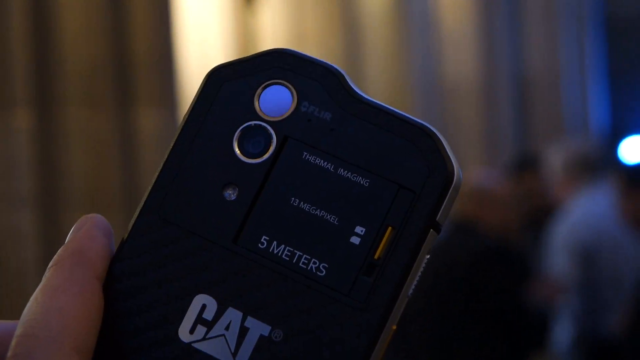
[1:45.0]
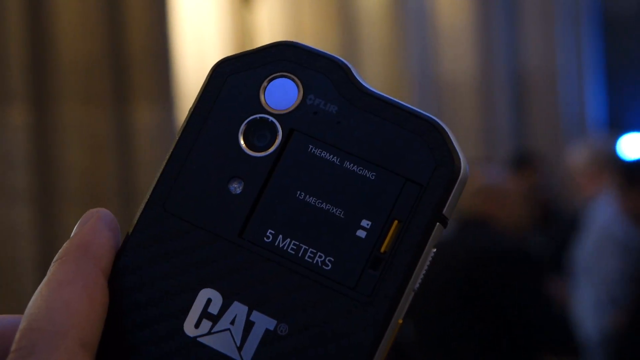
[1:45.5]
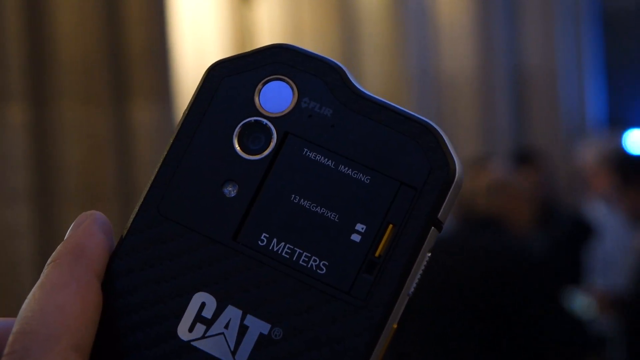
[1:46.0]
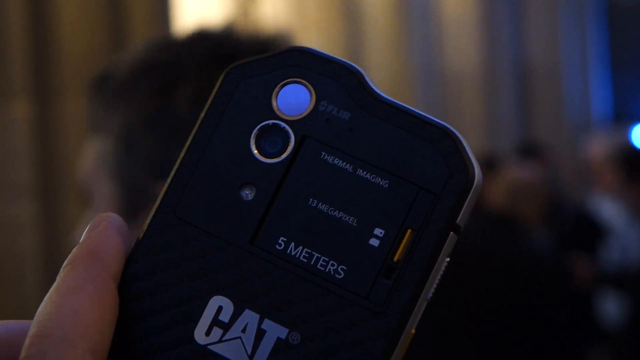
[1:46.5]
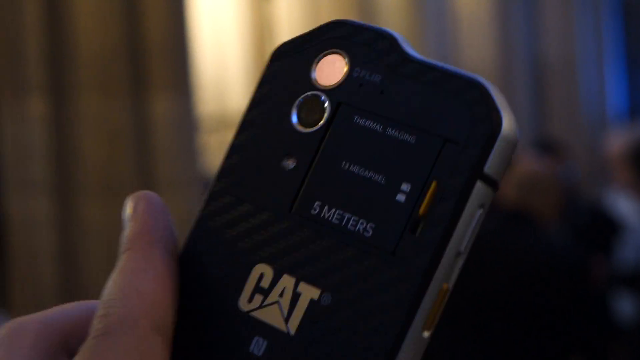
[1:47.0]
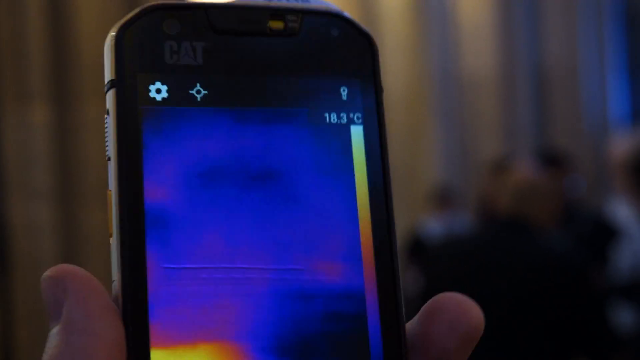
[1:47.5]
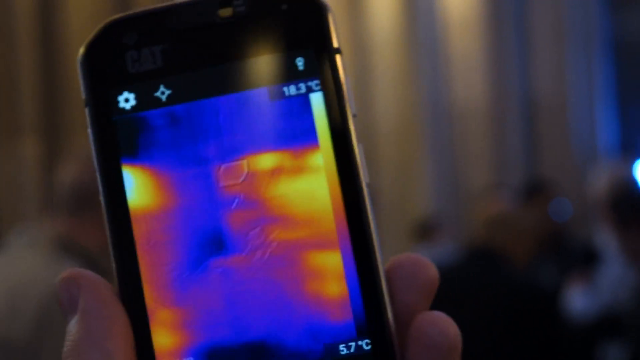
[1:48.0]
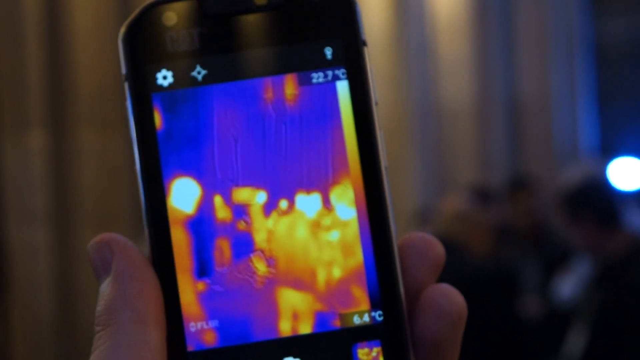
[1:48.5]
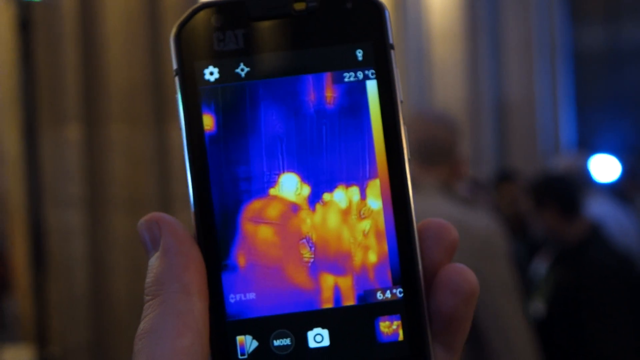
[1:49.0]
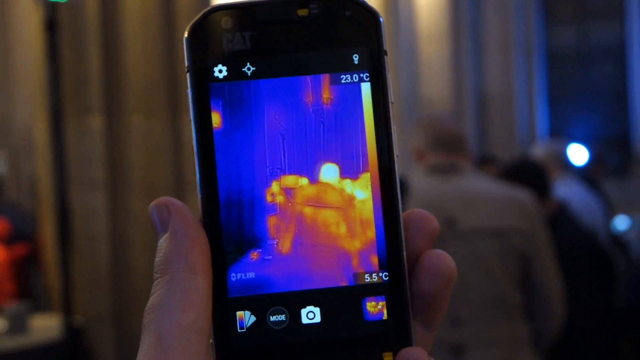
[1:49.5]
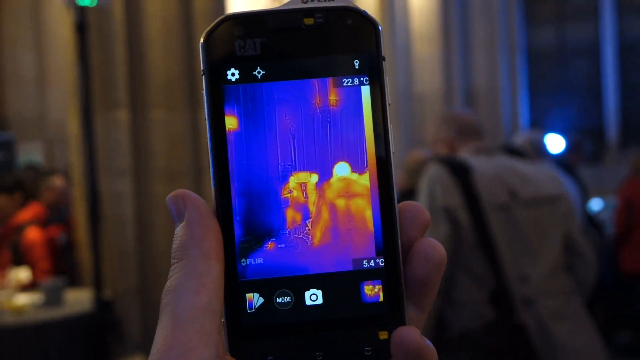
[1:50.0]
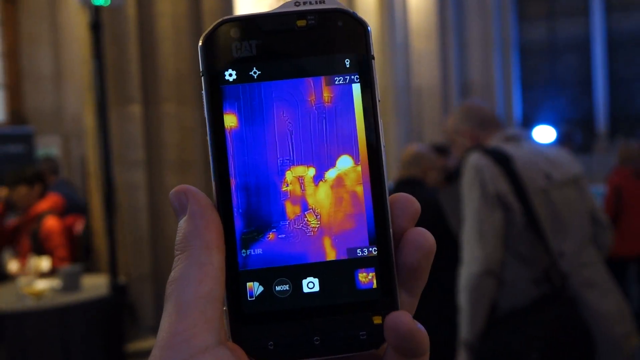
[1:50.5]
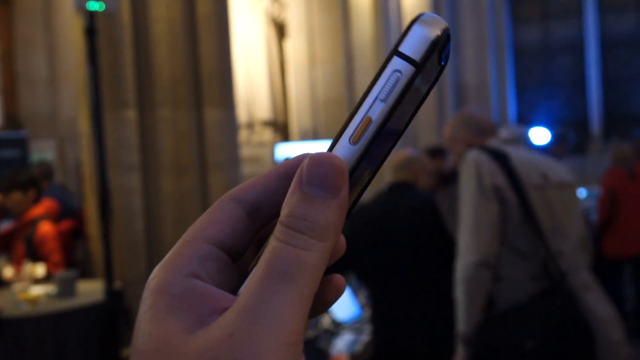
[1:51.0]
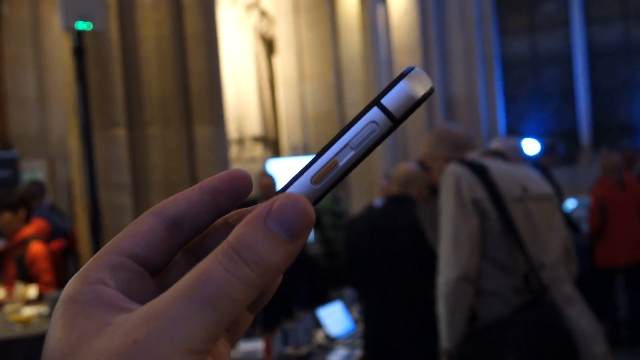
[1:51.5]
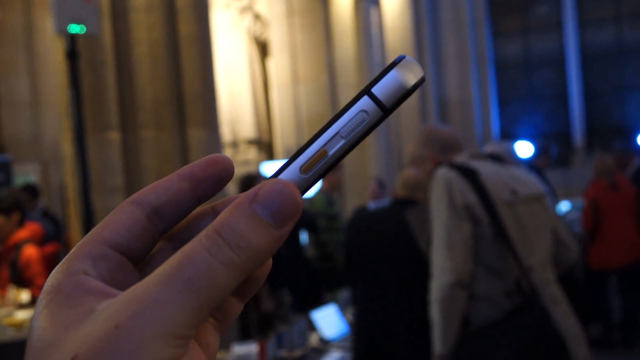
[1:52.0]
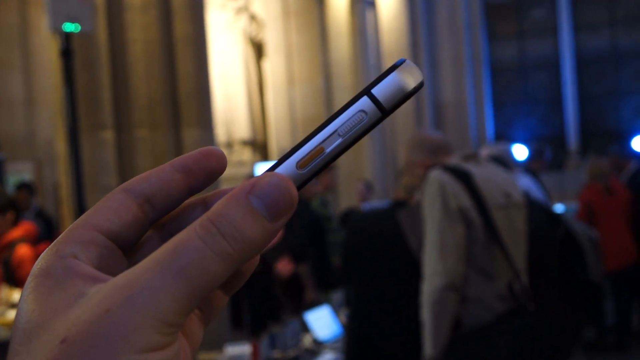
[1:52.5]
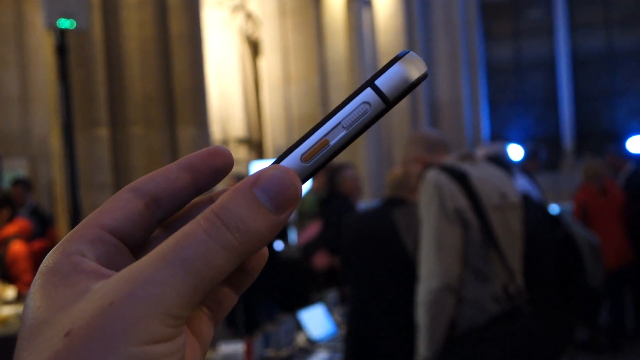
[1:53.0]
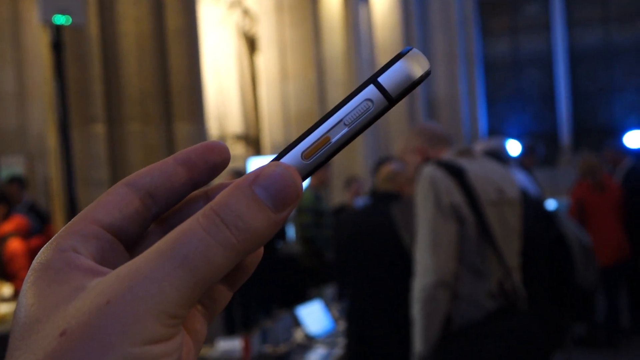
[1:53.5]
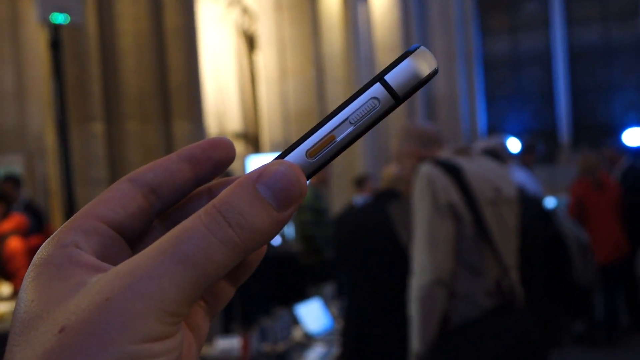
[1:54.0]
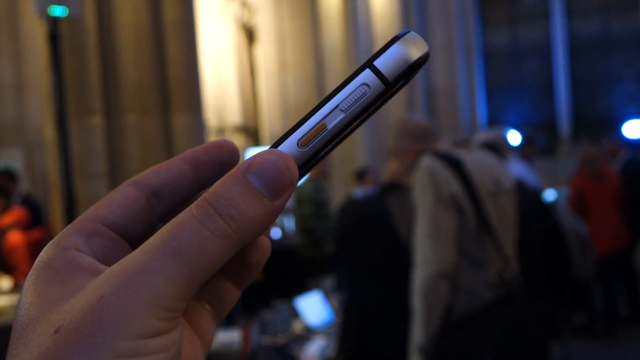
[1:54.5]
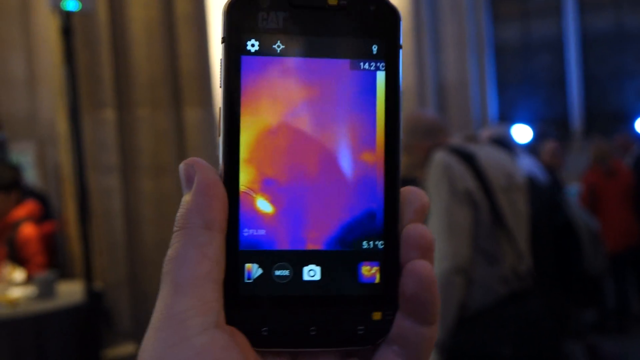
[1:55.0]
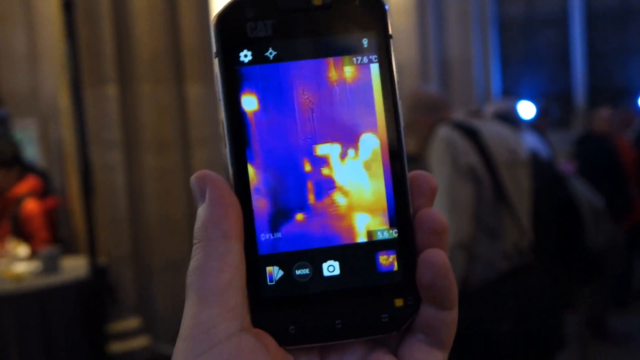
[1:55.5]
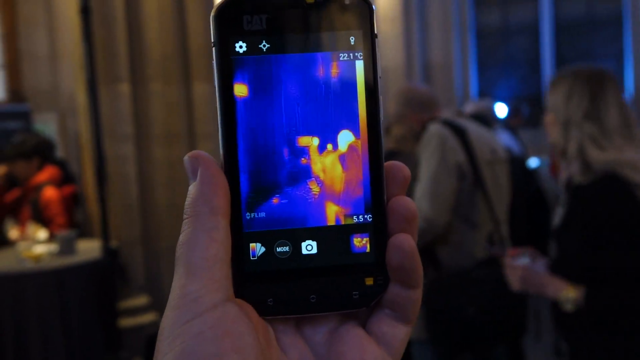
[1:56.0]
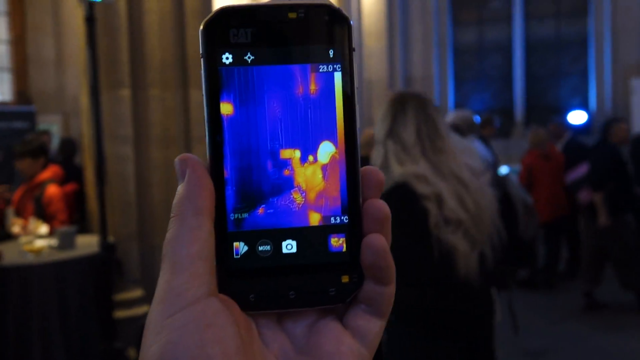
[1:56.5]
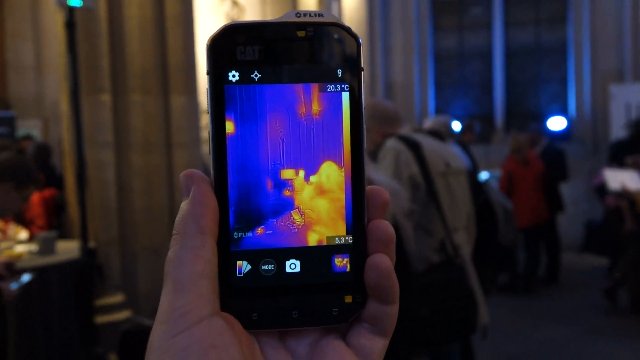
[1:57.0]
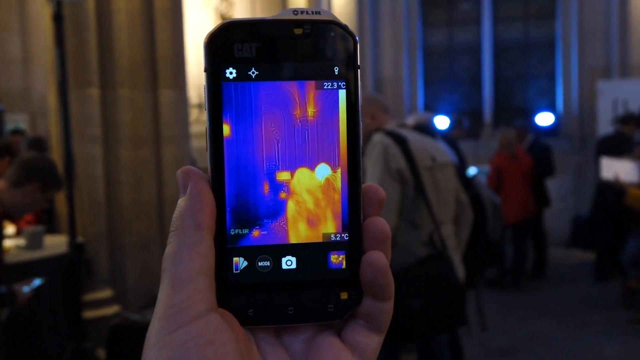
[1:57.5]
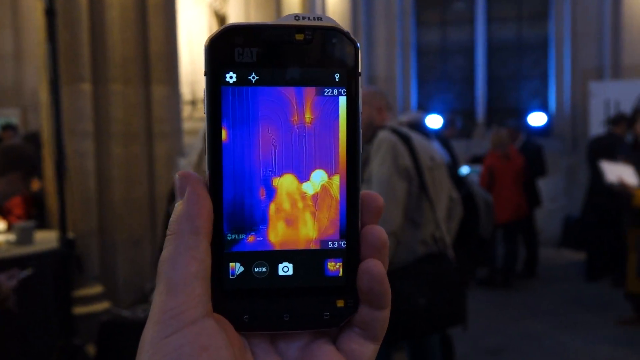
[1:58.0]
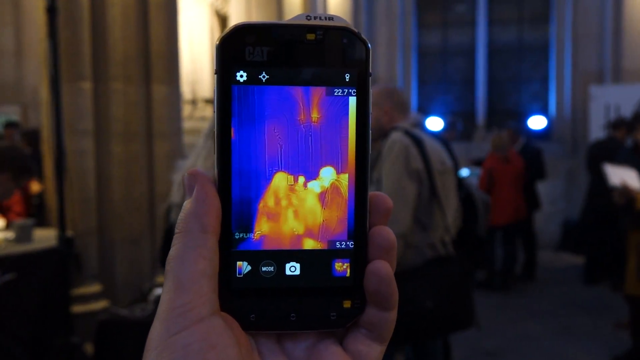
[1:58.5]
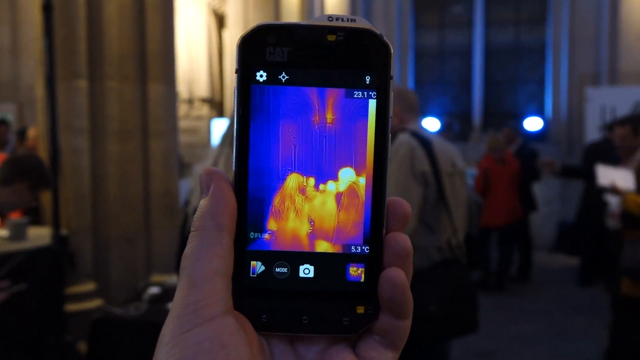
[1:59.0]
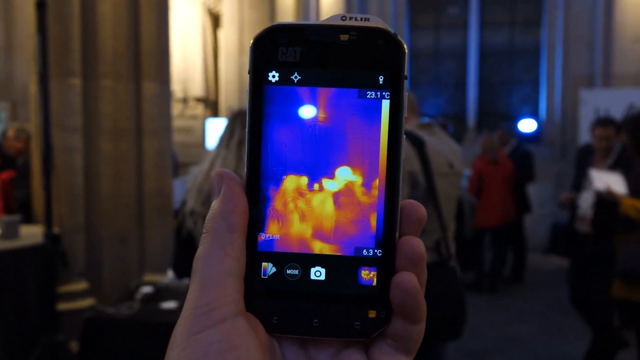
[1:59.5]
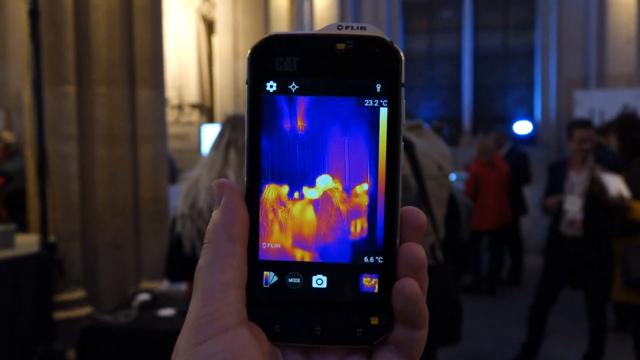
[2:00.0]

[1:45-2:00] A zoomed-in view of the back of the thermal imaging device is shown, then the man flips it to the front, showing people in the room through the thermal camera. He flips it to show the side, which is all silver, with what looks like a button that can be pushed down and up; his thumb holds the side of the phone with his other fingers on the back, and he kind of faces it down. He flips it again to show the people in the room through the thermal imagery, their bodies emitting heat in yellow and reddish tones. He keeps flipping the phone from back to front to side, showing its different angles and the thickness of its sides, while it keeps giving thermal readings of the objects and people in the room, at what appears to be a party showcasing the device.